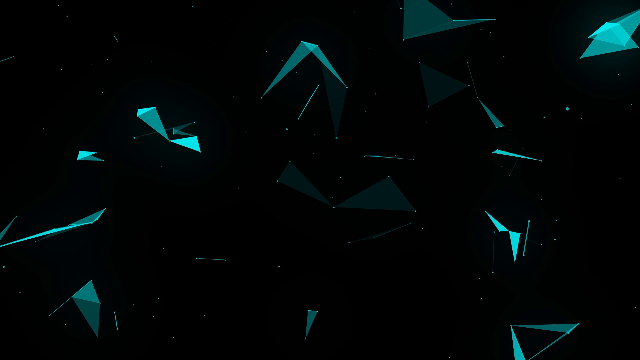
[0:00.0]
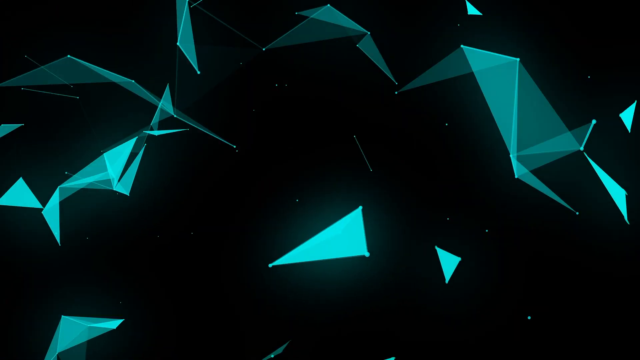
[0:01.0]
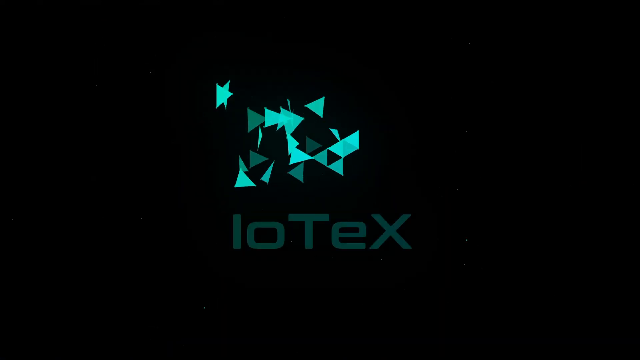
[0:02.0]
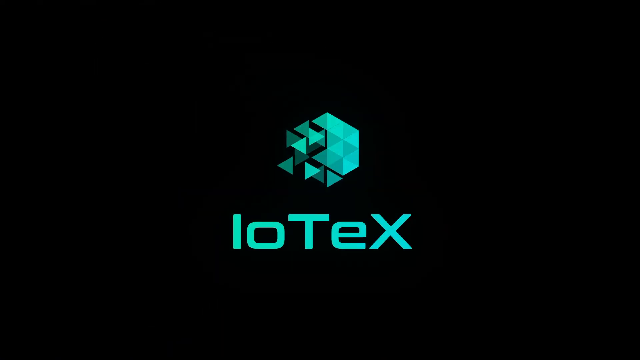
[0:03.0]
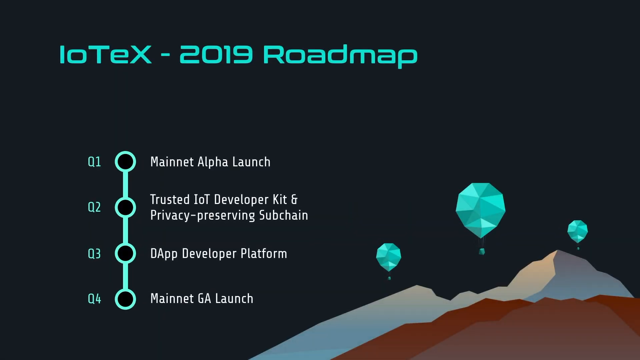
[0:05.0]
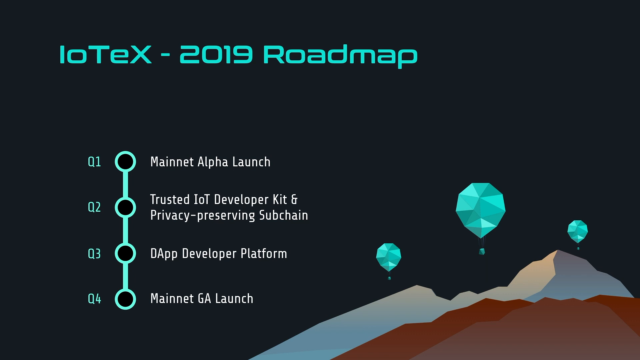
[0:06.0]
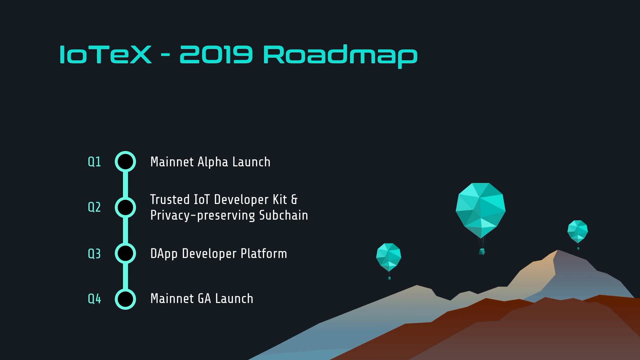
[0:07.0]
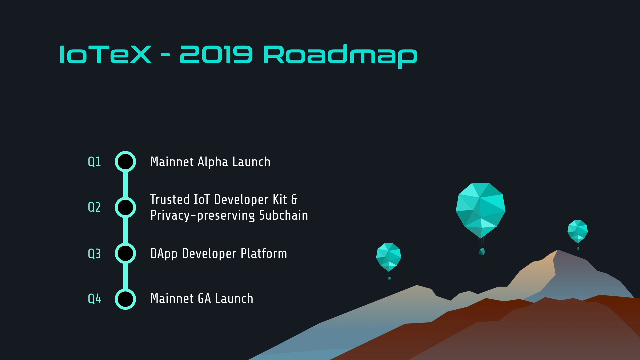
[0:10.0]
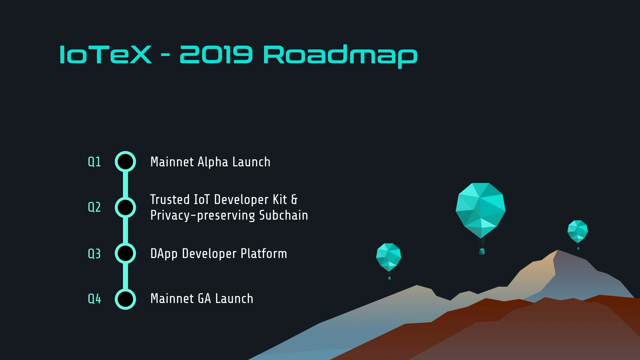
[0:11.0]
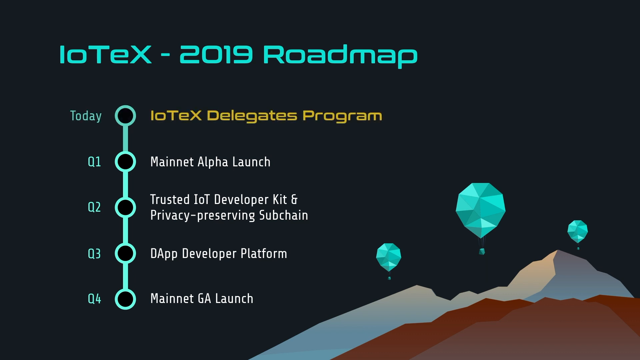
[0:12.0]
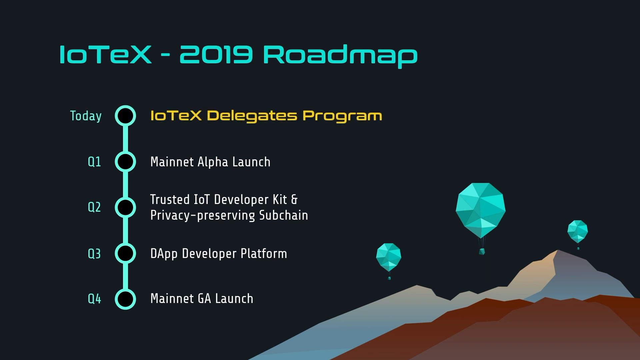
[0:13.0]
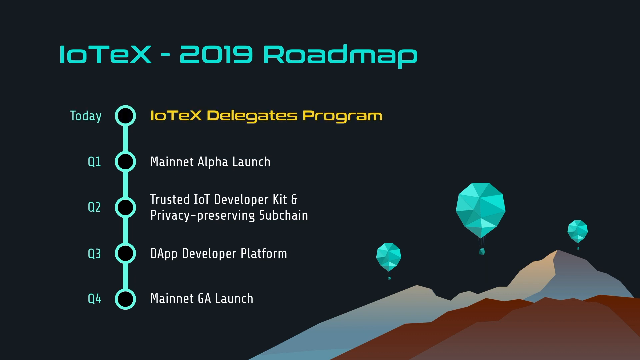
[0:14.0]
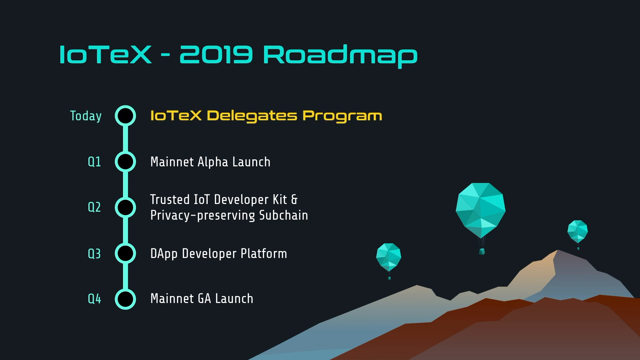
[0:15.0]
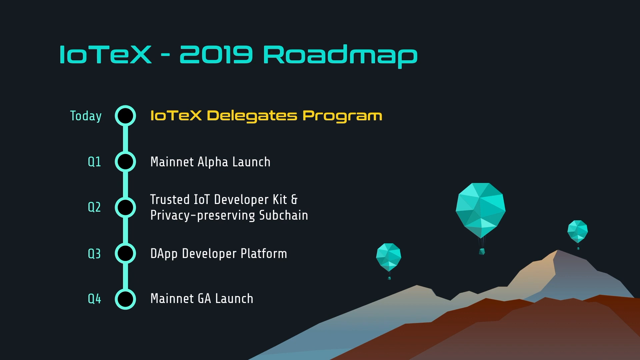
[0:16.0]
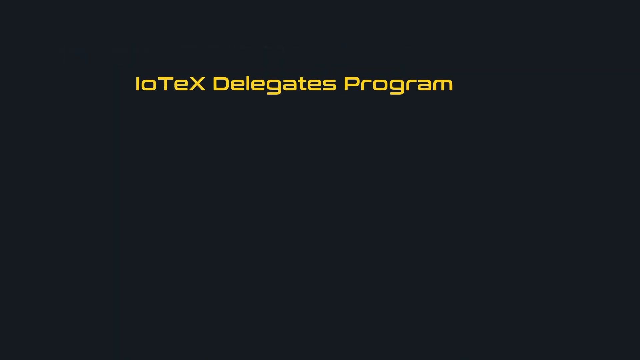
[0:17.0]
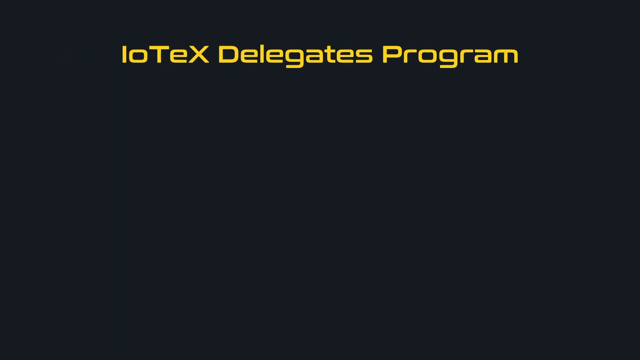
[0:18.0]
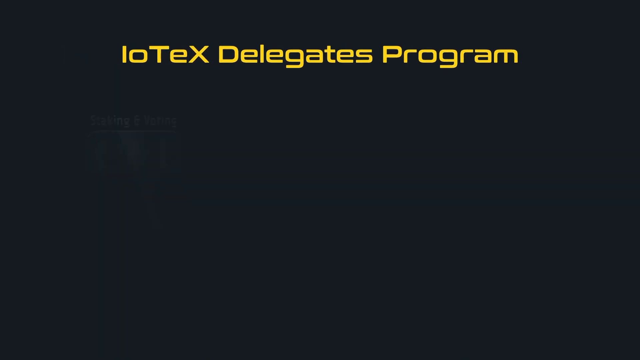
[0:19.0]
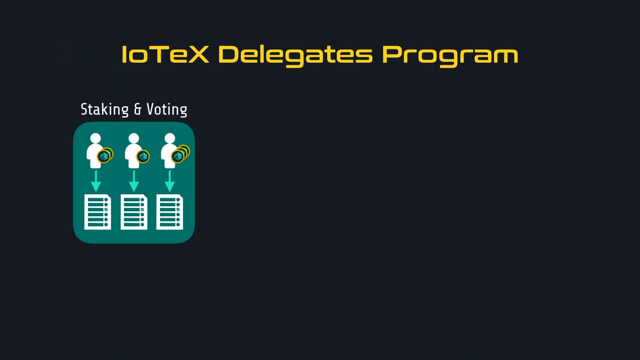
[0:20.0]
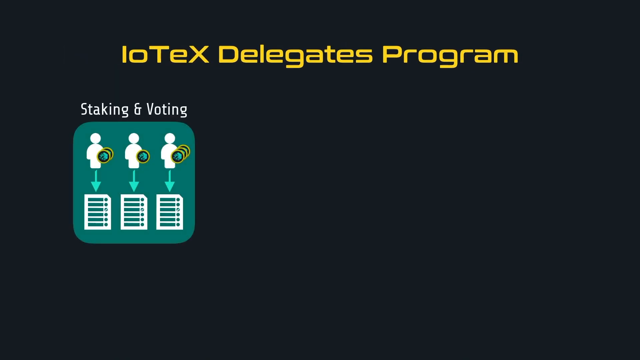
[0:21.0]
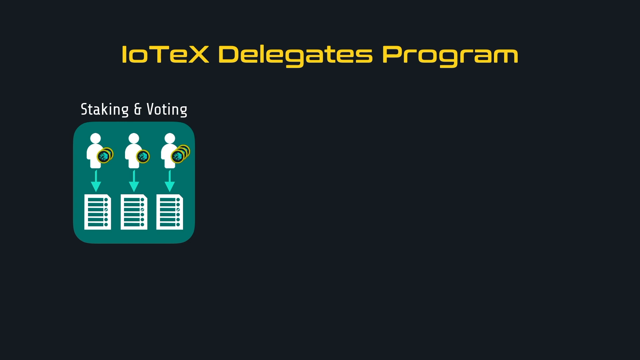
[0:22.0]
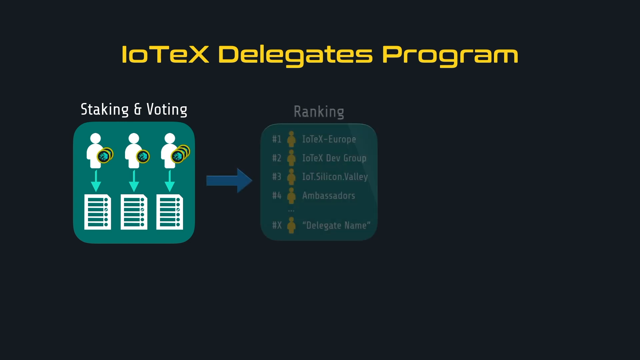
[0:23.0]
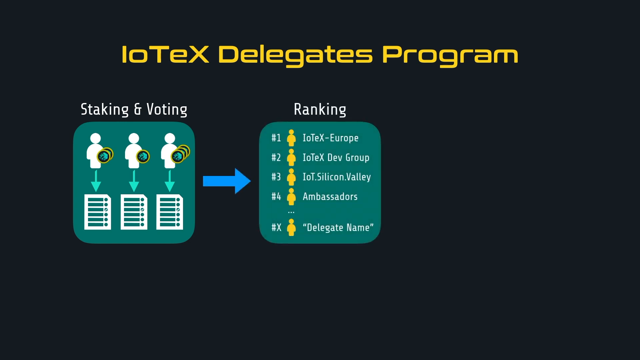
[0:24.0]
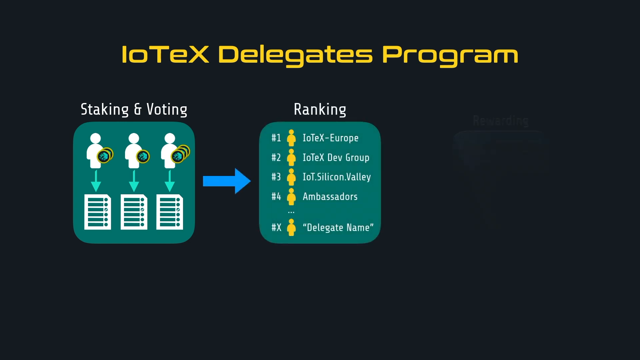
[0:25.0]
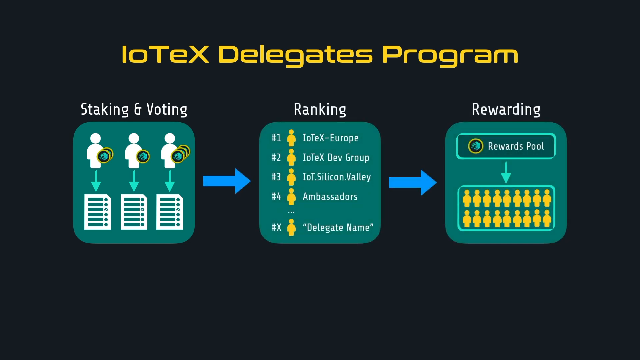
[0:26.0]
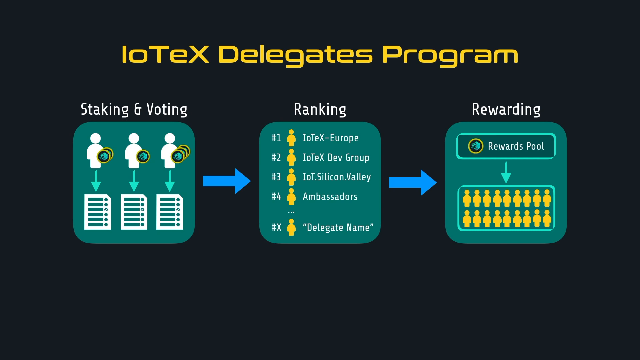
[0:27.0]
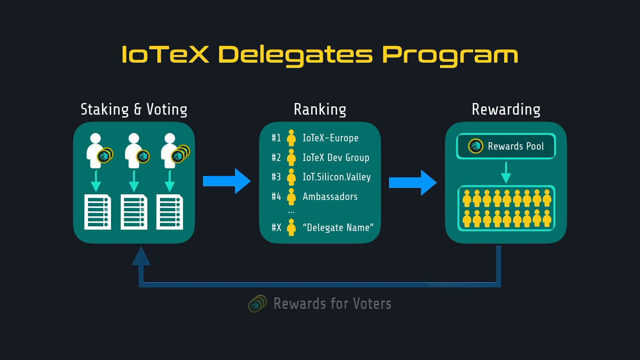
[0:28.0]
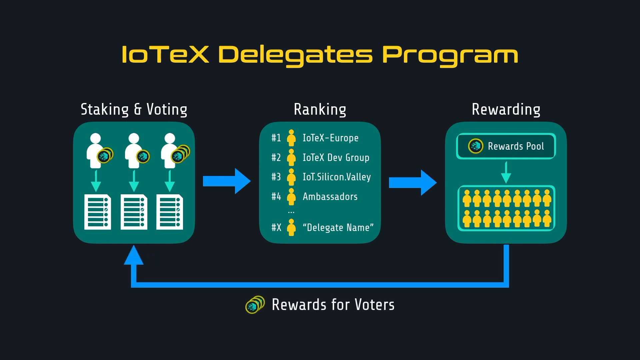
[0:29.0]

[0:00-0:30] Shapes that look somewhat like triangles, in a greenish turquoise color, fly around a screen with a black background. Eventually they all come together and form what looks somewhat like a pentagon, and underneath it "IoTeX" appears in green. Next, a screen reads "IoTeX-2019 road map", with a numbered list underneath in white text whose numbers are in the turquoise green color. On the right side is an animated version of what looks like a mountain with three hot air balloons, also turquoise green. Text then comes out reading "today" in turquoise green, and then "IoTeX Delegates Program" appears in yellow. The yellow text grows larger and becomes the title of the next page. Underneath is an infographic with three green boxes: the first has what look like images of people and documents, the second has blue text along with images of people in yellow, and the last has a bunch of yellow stick men.